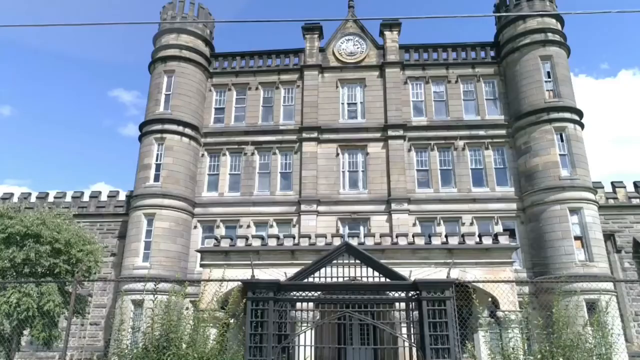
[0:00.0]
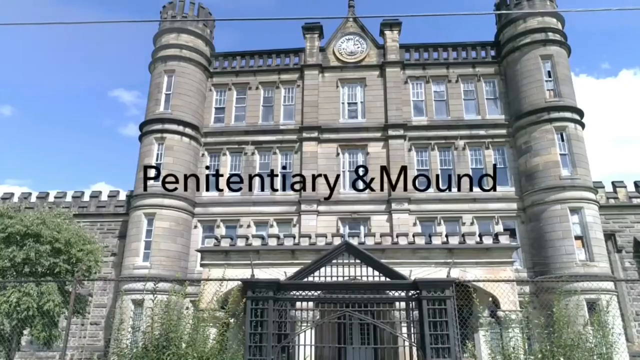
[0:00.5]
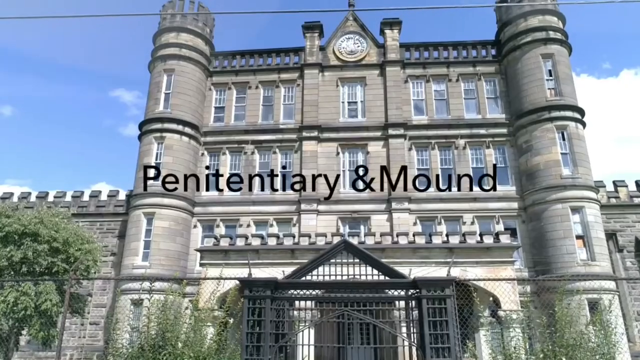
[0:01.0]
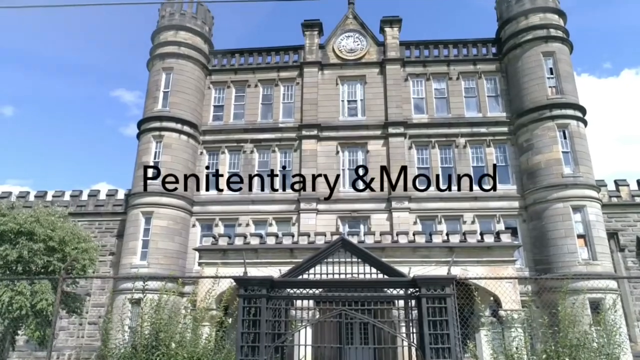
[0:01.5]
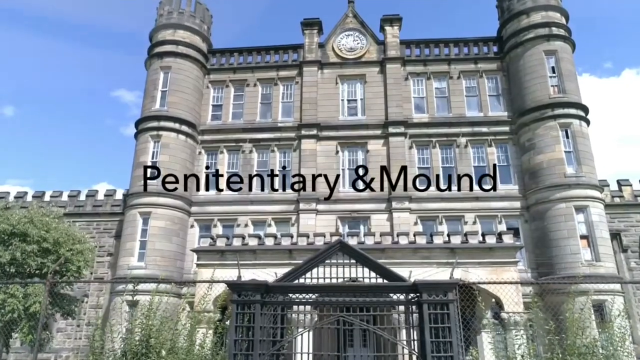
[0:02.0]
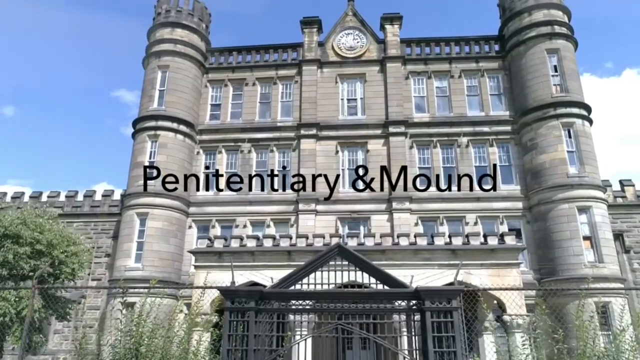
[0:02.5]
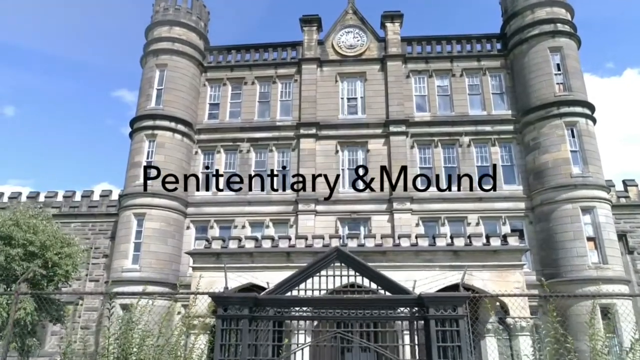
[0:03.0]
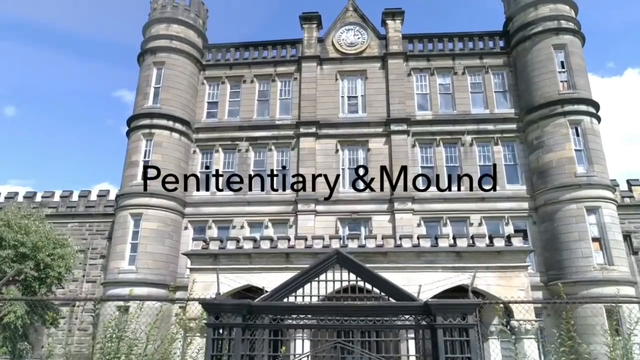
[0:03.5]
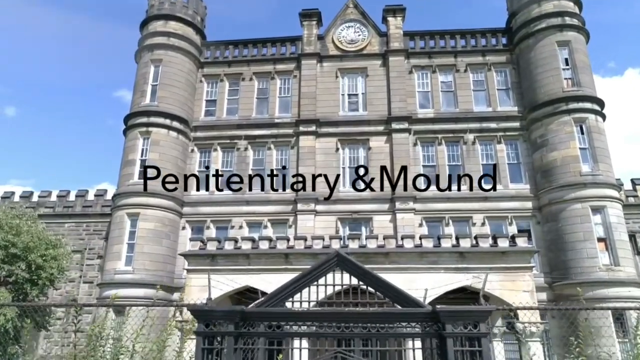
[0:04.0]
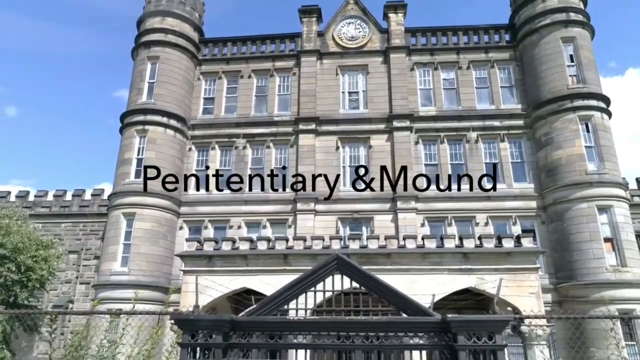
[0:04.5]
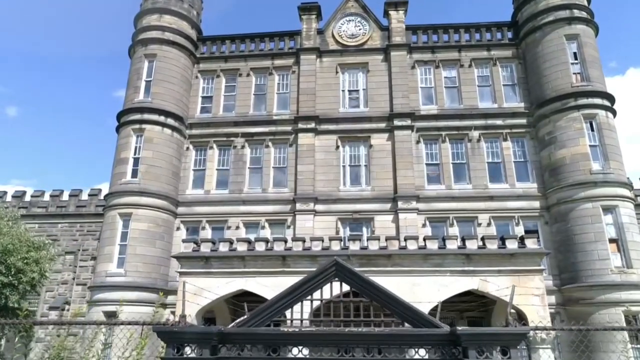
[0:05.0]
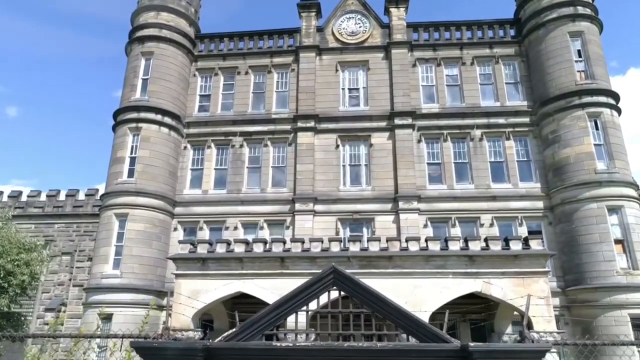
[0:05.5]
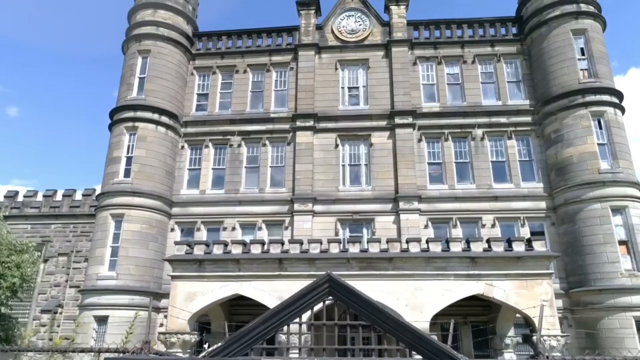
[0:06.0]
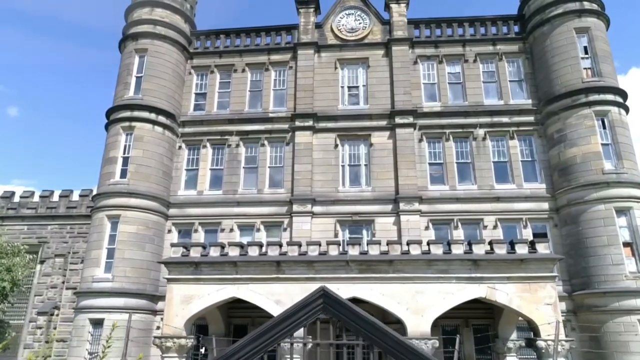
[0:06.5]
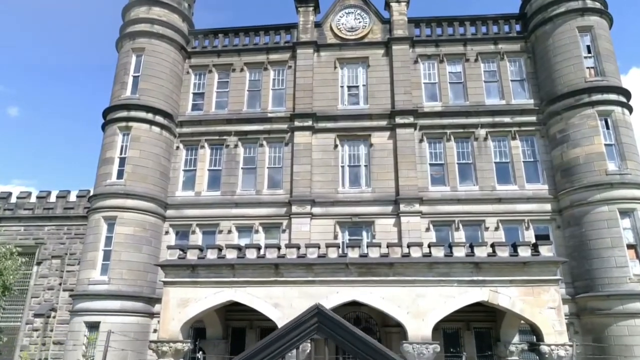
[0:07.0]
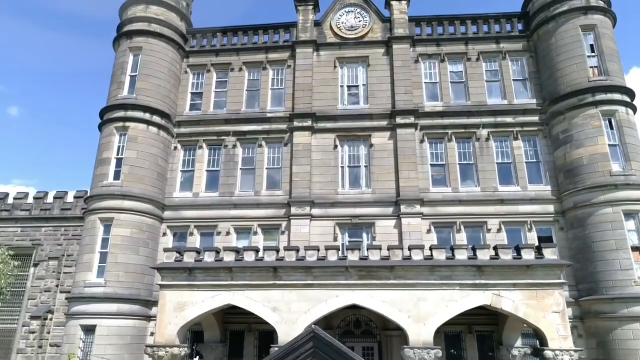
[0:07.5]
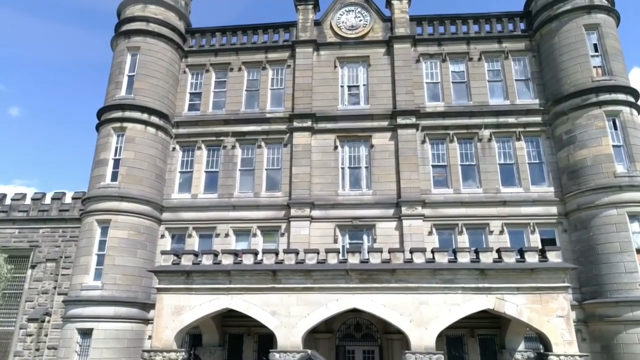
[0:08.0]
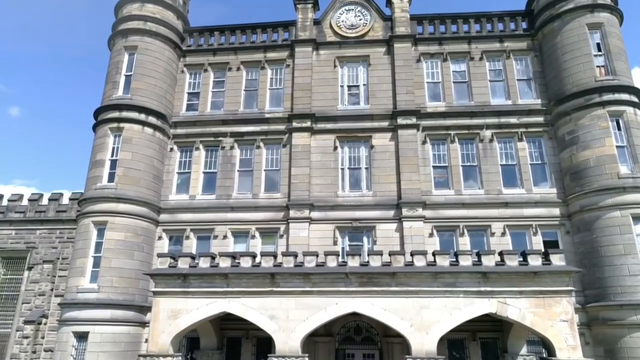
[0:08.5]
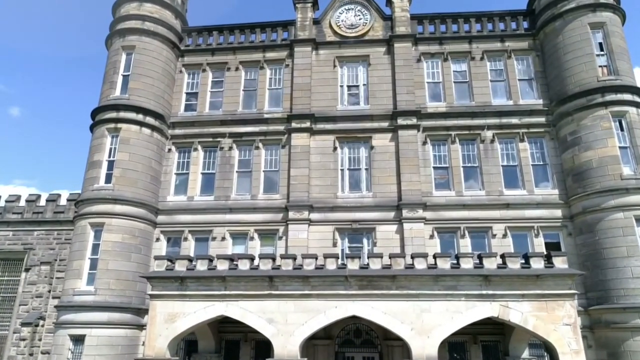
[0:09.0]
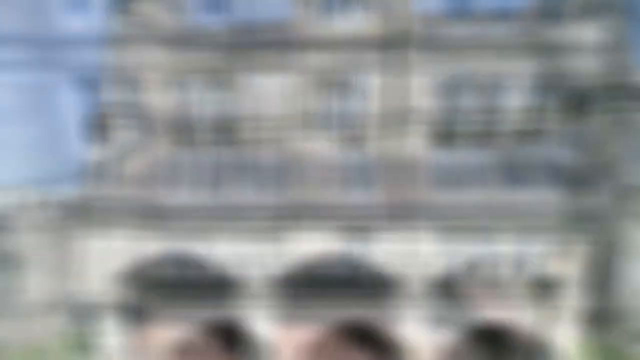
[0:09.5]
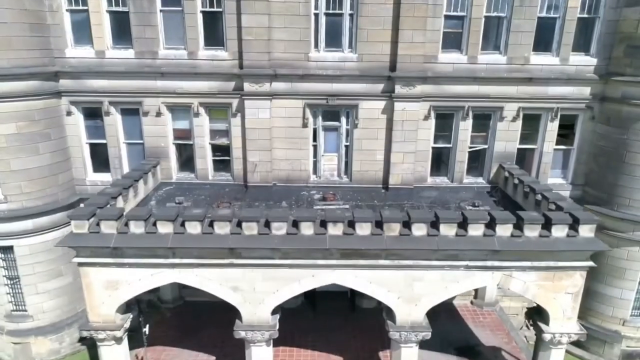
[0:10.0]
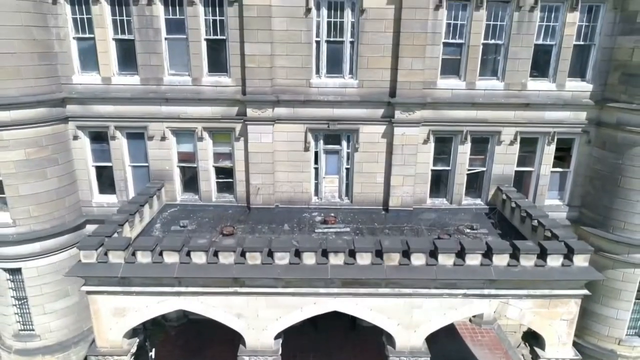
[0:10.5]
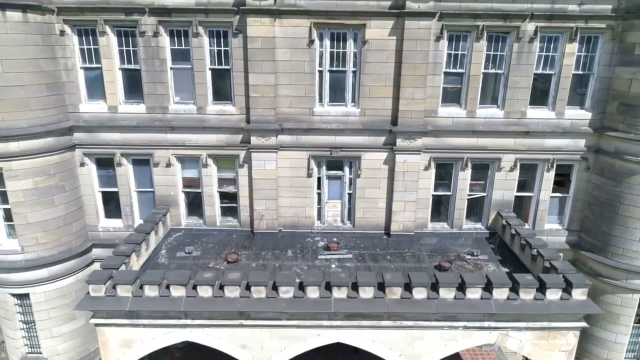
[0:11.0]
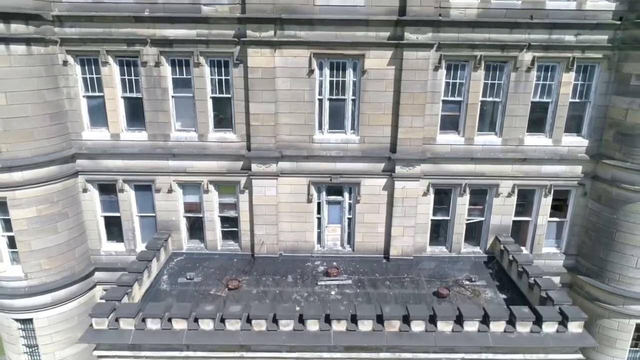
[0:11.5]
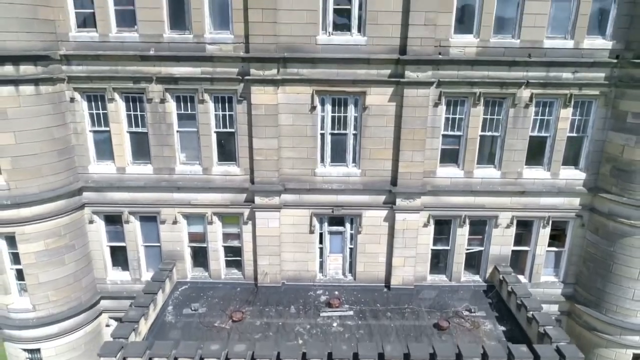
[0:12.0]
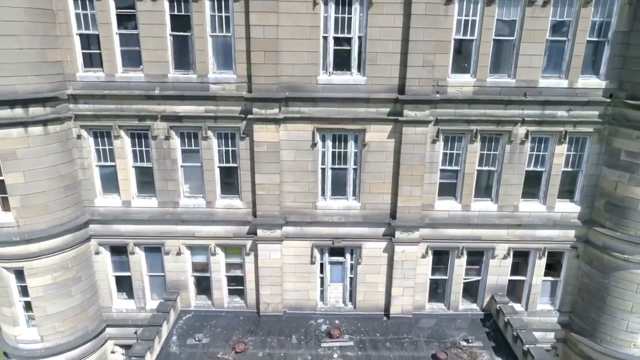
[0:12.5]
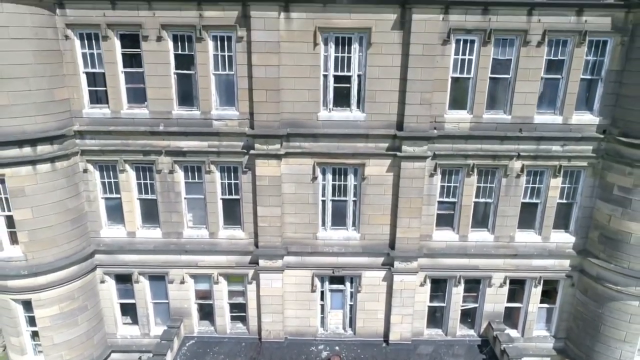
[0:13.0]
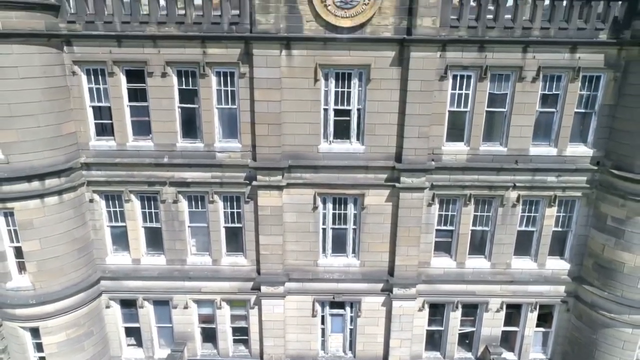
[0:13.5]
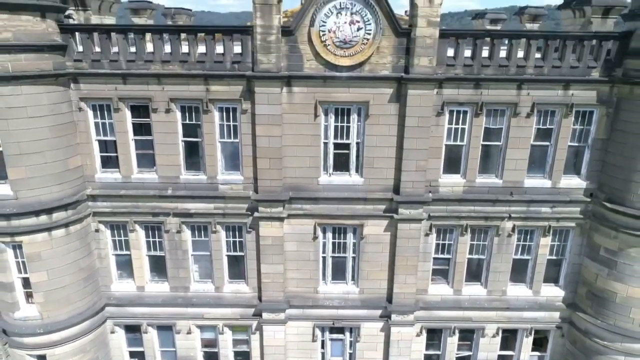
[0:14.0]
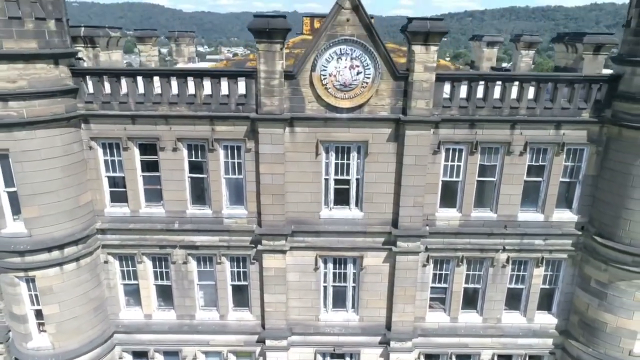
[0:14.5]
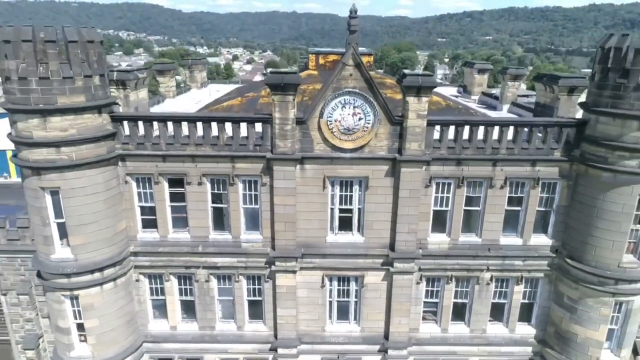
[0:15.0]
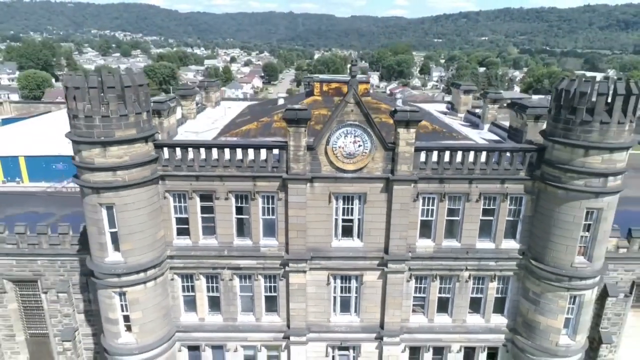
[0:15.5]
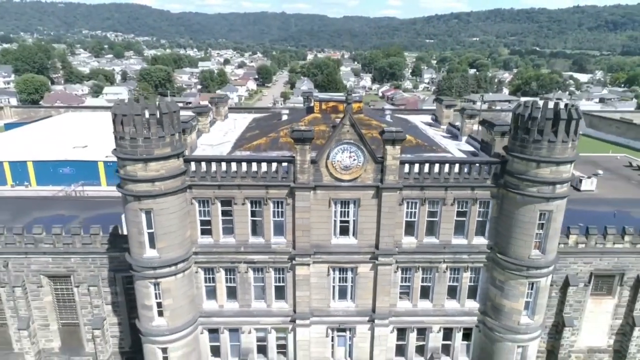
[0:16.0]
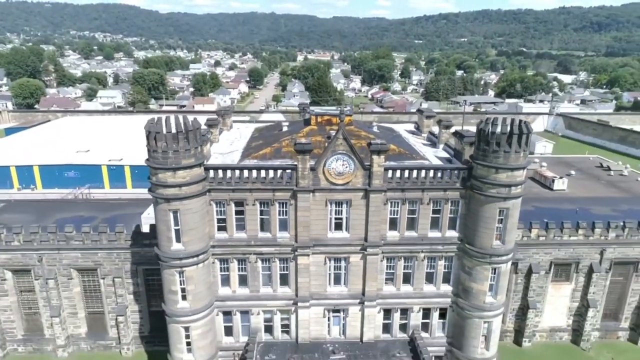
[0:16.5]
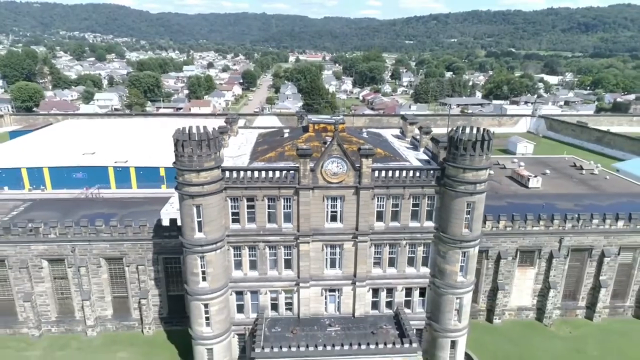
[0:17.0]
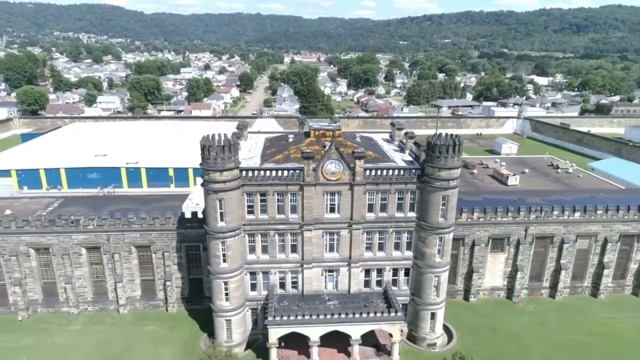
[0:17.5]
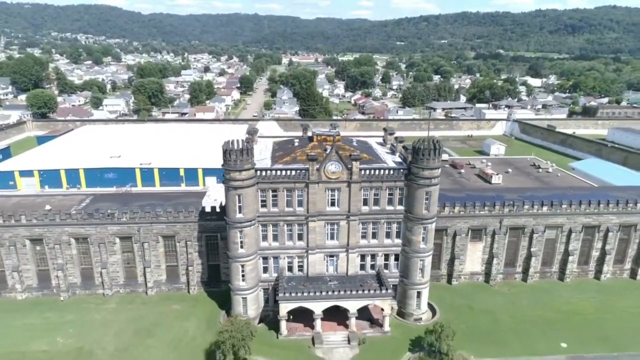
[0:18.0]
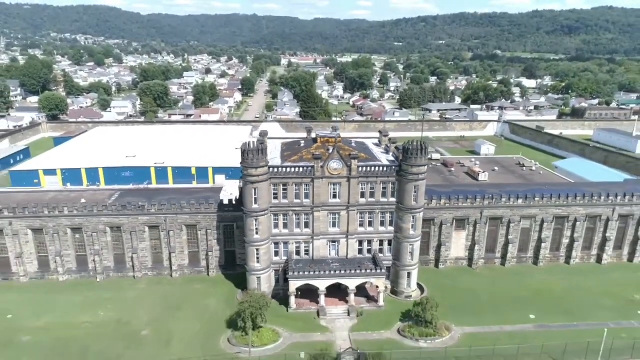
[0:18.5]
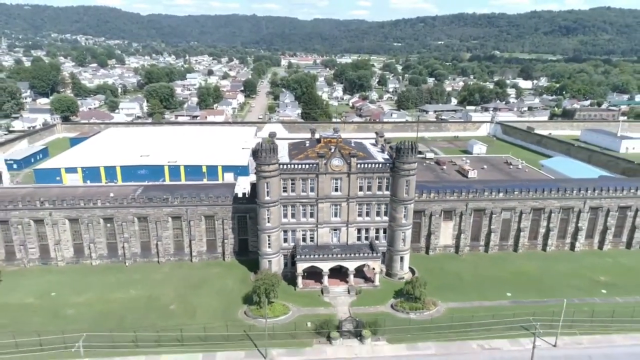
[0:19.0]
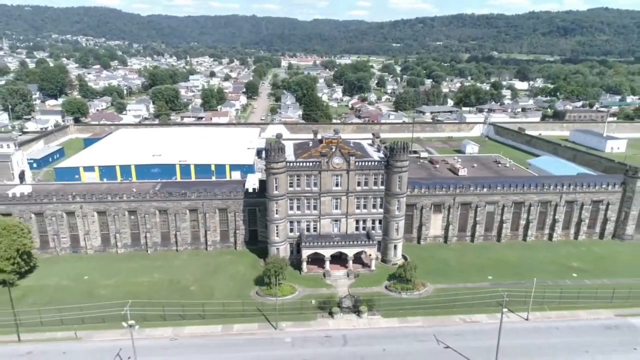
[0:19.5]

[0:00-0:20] Drone footage opens on a very grand building made of somewhat grey stone, with architecture that makes it look like a castle. As the video progresses, it becomes clear that this is a penitentiary, given away by huge grilled gates that appear to be locked. On either side of the building are almost cylindrical turrets, giving it the look of a sort of fairy-tale castle. The drone zooms in on the building, then rises higher and higher, looking down onto it and revealing more as it climbs. It keeps going higher and moving further away until the full building and its grounds are in view. The walls match the castle style of the building and are very high. They enclose quite a large perimeter, with lots of grounds and areas apparently for inmates to exercise and do different activities.